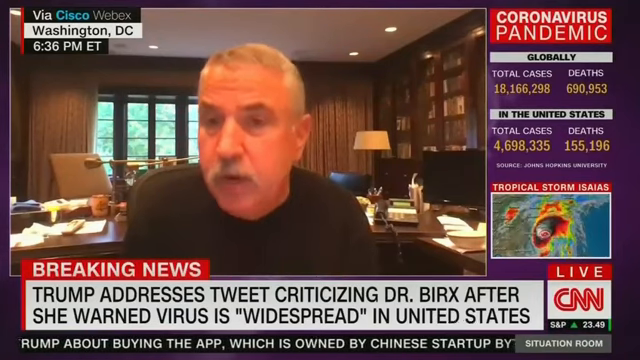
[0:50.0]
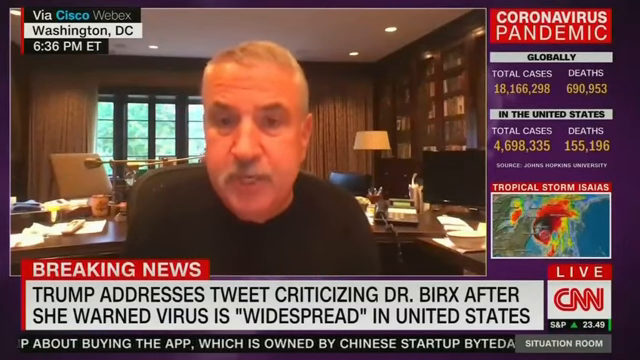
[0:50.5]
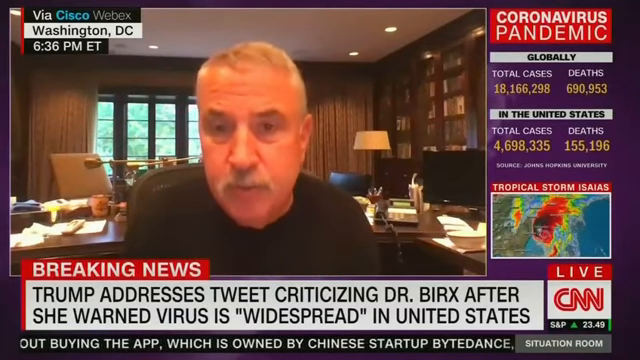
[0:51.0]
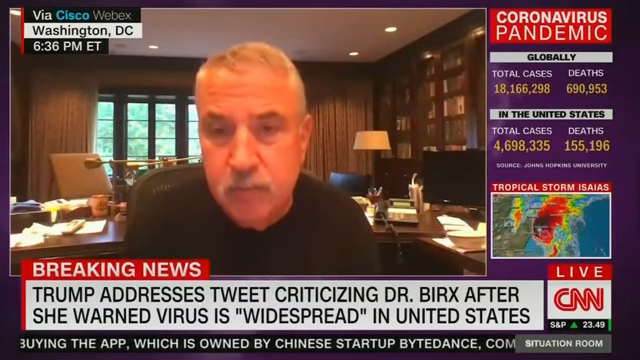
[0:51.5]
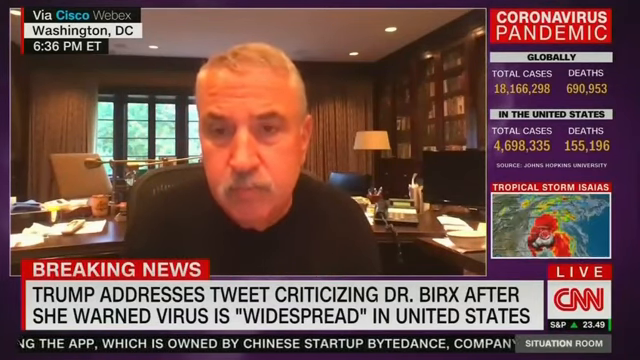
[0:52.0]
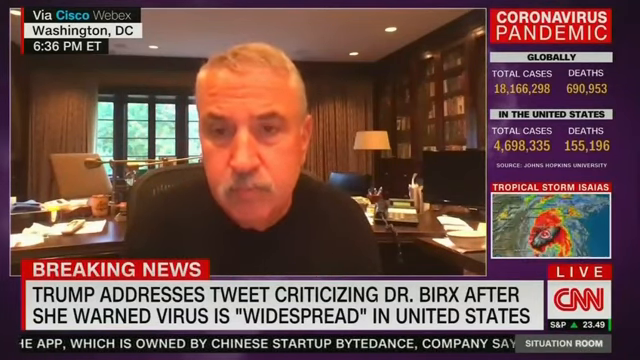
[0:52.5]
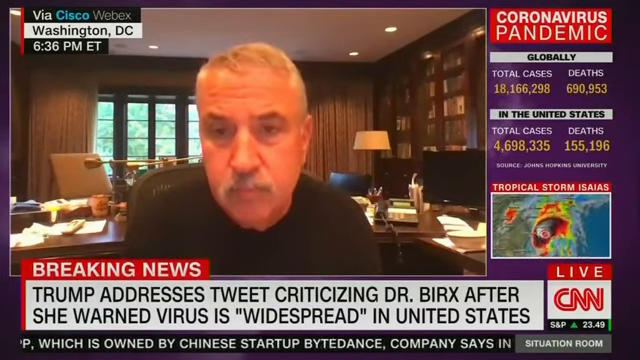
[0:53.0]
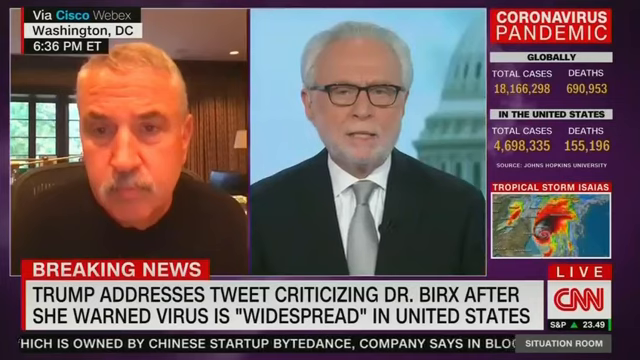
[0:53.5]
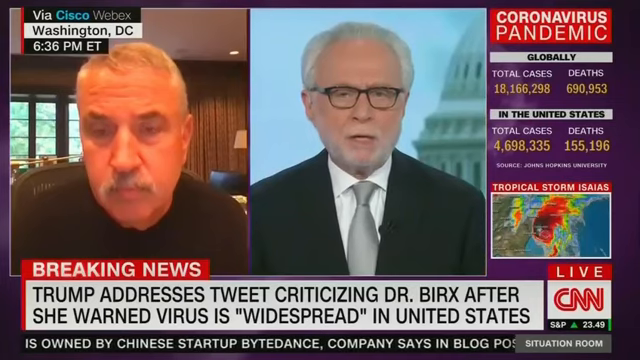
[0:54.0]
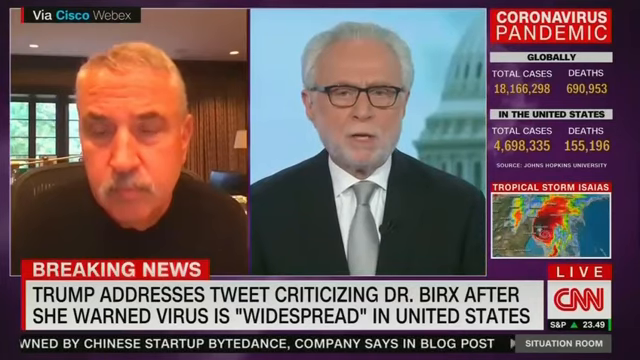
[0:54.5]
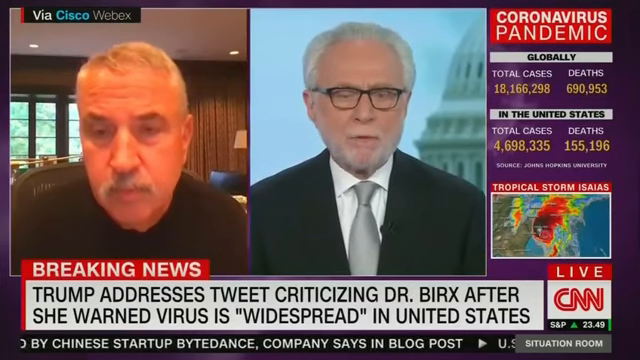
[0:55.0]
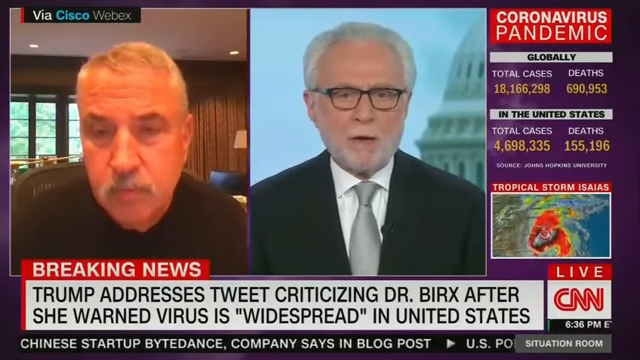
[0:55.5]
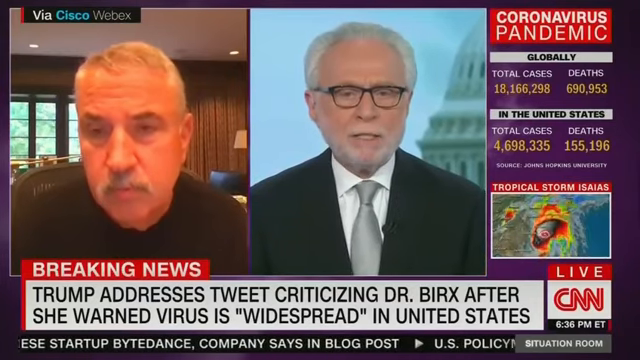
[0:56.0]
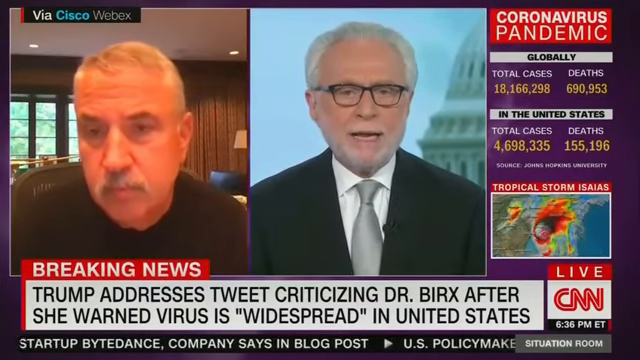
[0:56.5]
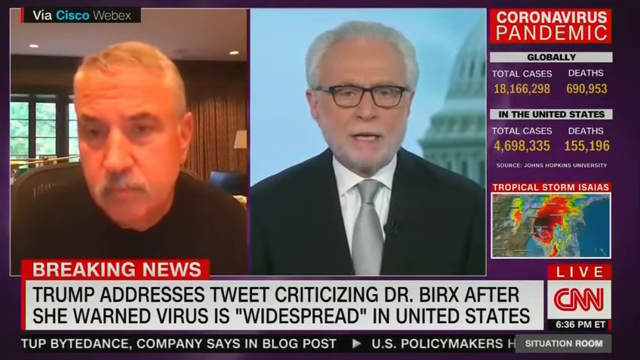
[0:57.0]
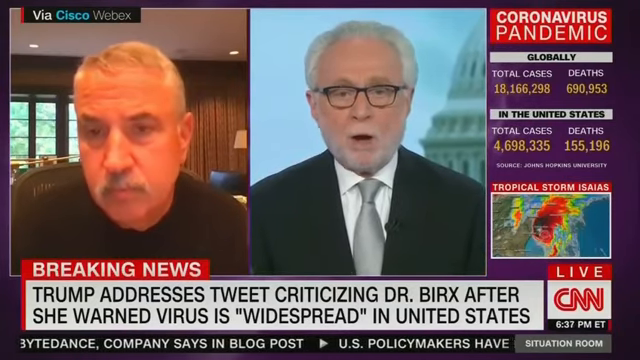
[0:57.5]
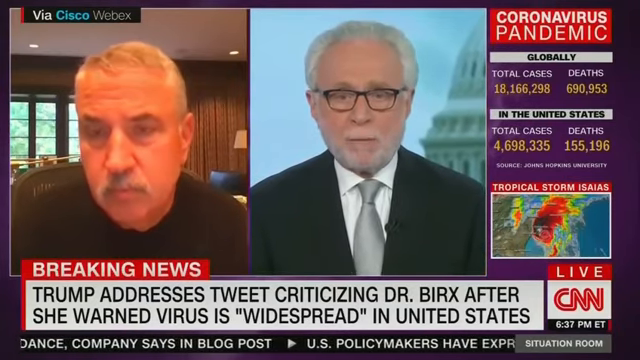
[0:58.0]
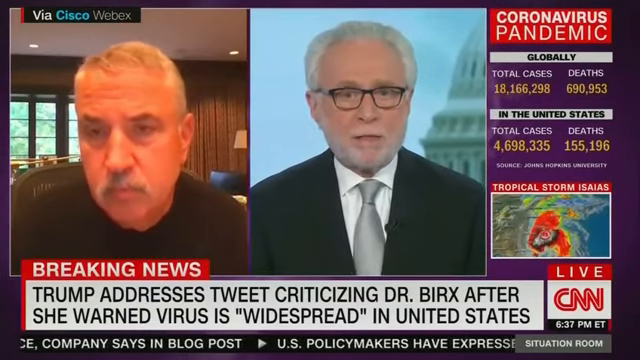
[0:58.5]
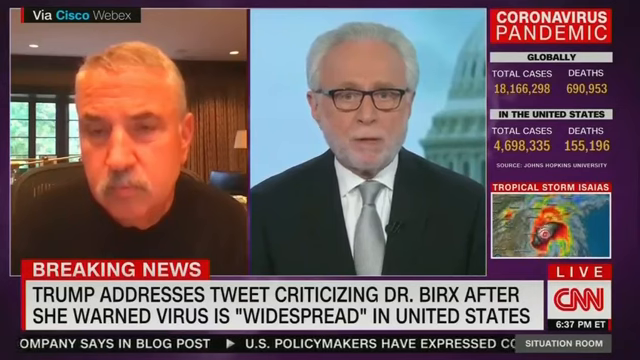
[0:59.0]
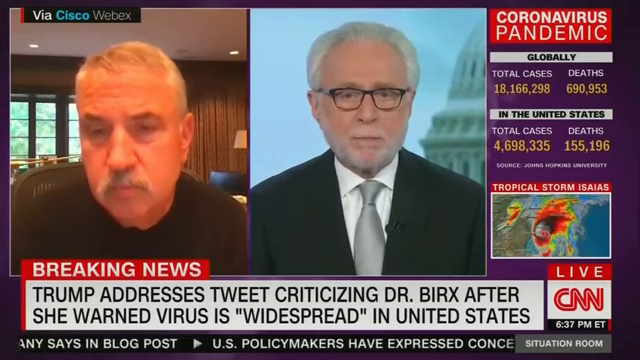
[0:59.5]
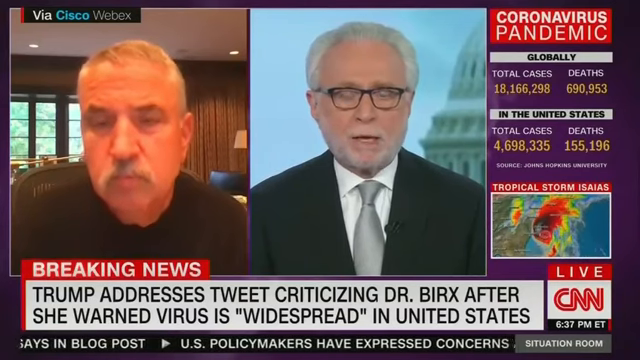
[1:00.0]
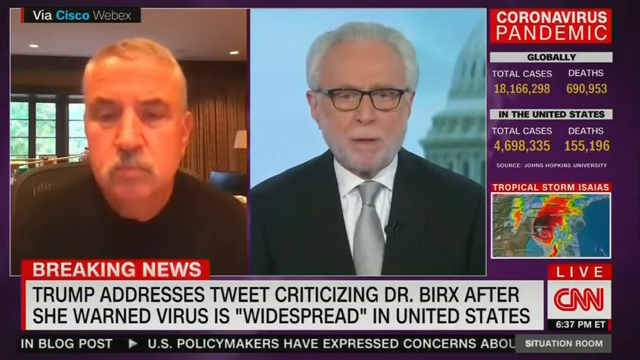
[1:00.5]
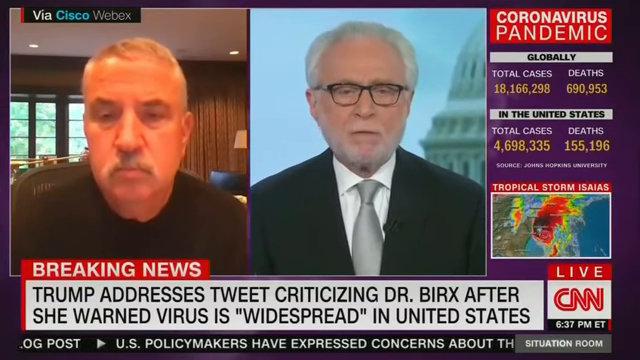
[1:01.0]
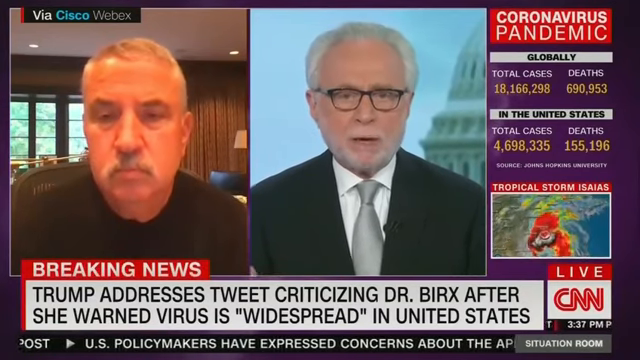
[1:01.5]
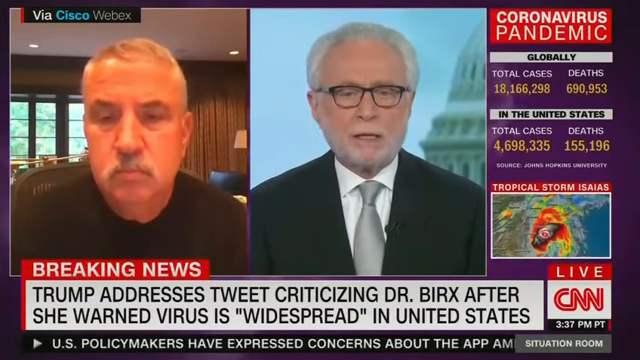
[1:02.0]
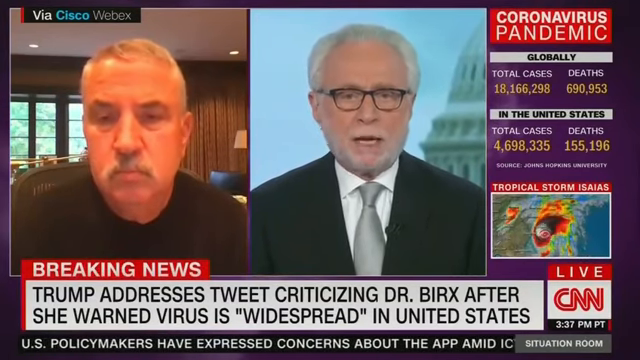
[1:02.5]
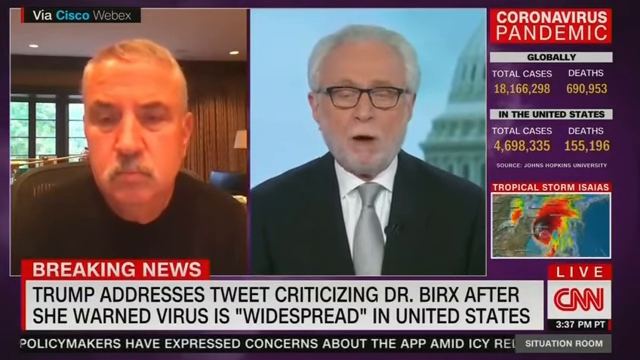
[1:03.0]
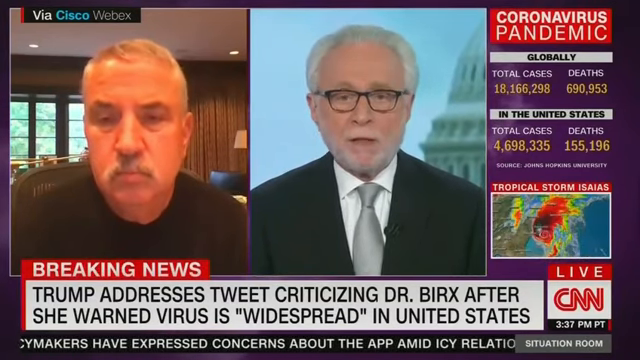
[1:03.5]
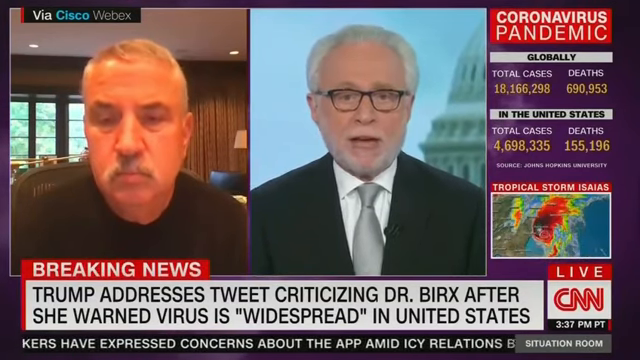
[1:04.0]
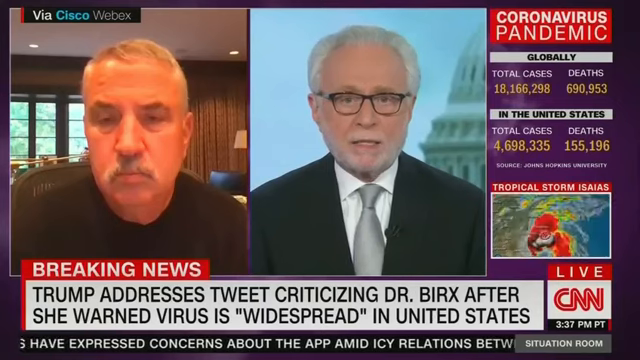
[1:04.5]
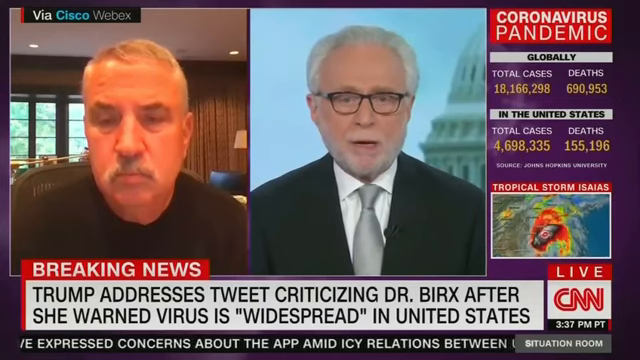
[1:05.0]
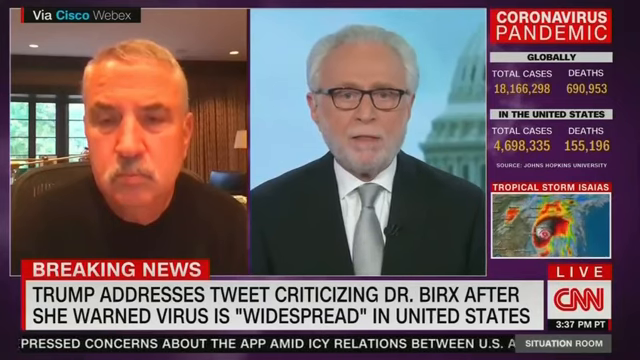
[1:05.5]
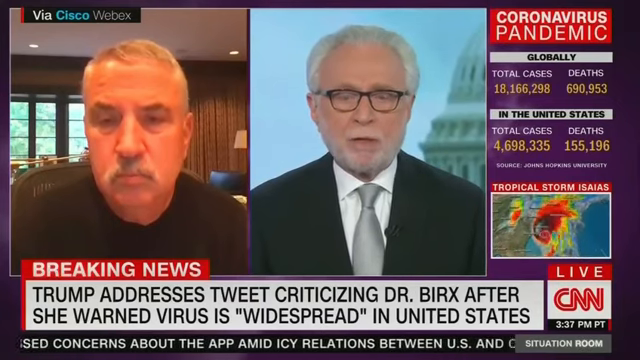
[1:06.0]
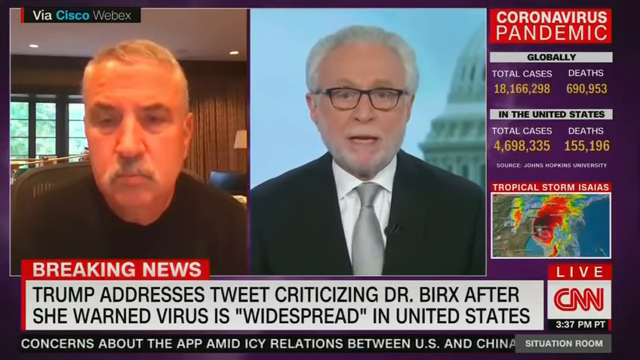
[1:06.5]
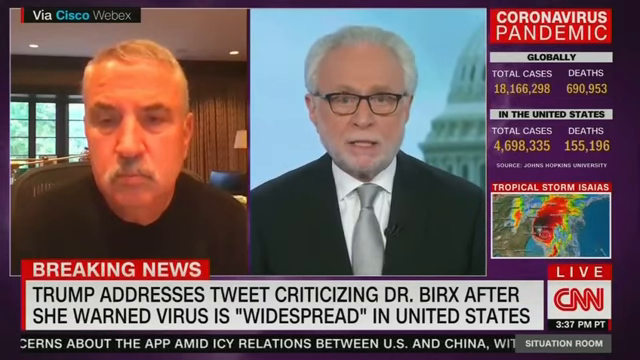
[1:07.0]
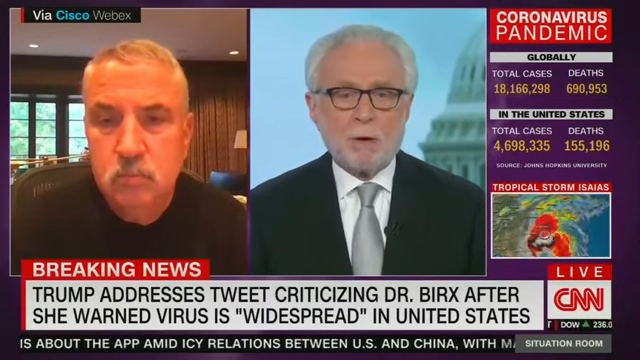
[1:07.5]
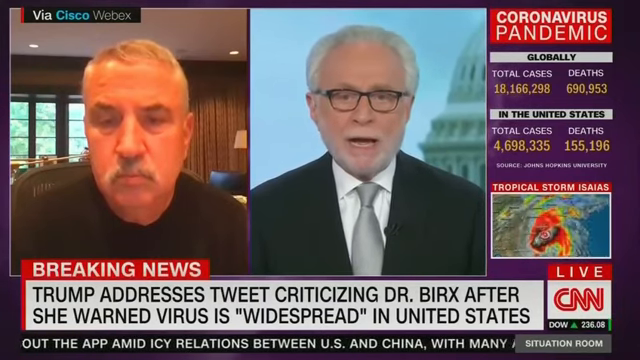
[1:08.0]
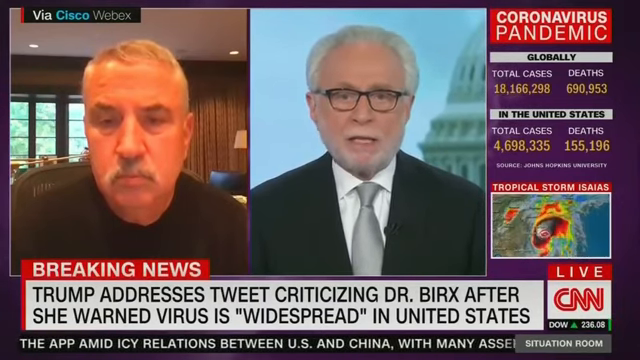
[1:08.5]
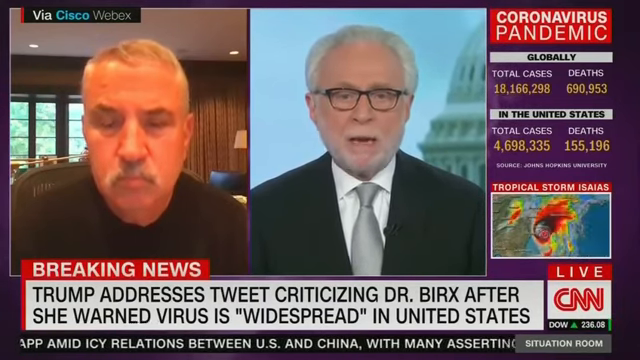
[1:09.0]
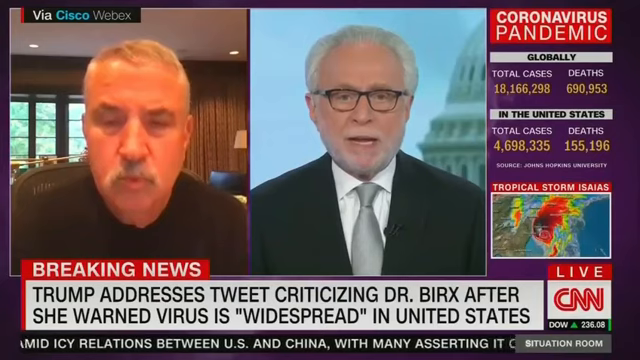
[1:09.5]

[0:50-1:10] A man is talking over the web. A banner reads "tweet criticizing Dr. Birx after she warned virus is widespread in the United States." Text reads "coronavirus pandemic globally" with total cases and deaths, plus total cases and deaths in the United States, and tropical storm Isaias is being tracked. It is all reported live from CNN. News runs along the bottom of the screen, and text reads "the situation room." Wolf Blitzer appears on a split screen, interviewing the man, and then Blitzer talks for the rest of the shot. Blitzer wears a black suit, a gray silver tie and glasses, and looks like he is in the CNN newsroom, while the other man looks like he is in his home office.